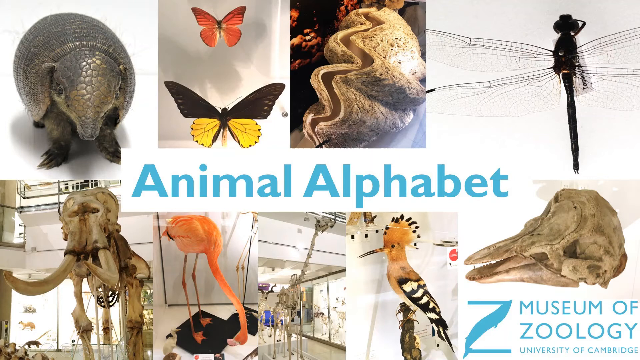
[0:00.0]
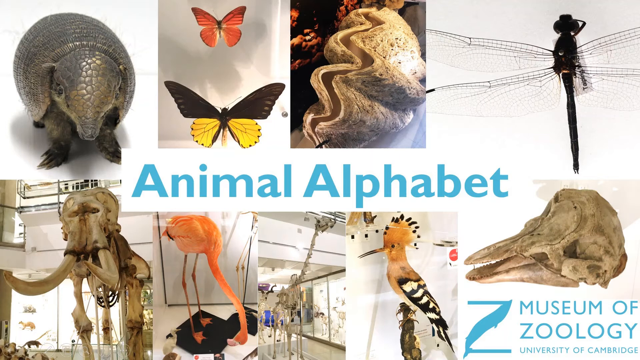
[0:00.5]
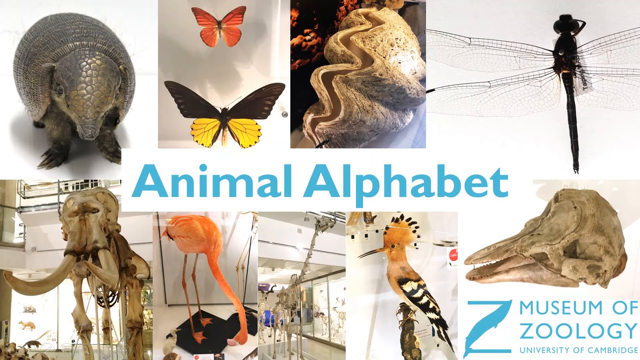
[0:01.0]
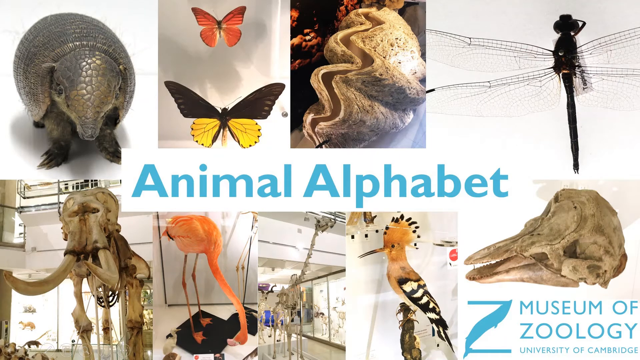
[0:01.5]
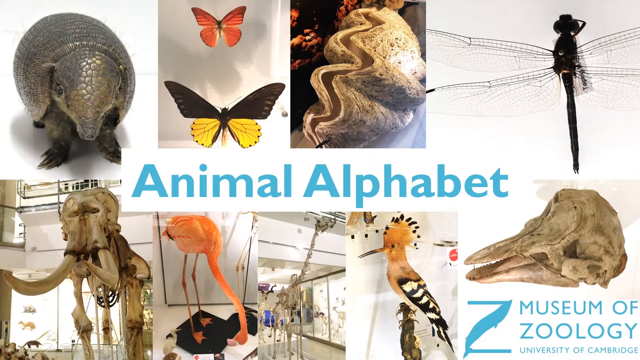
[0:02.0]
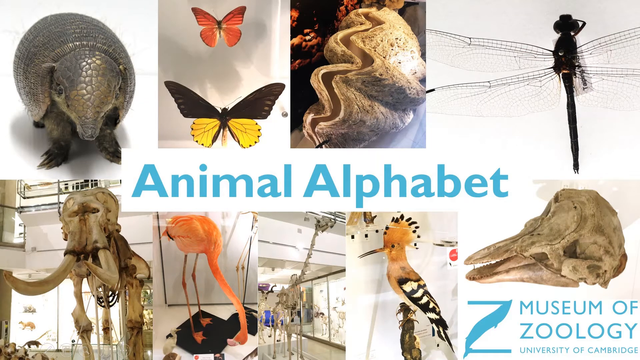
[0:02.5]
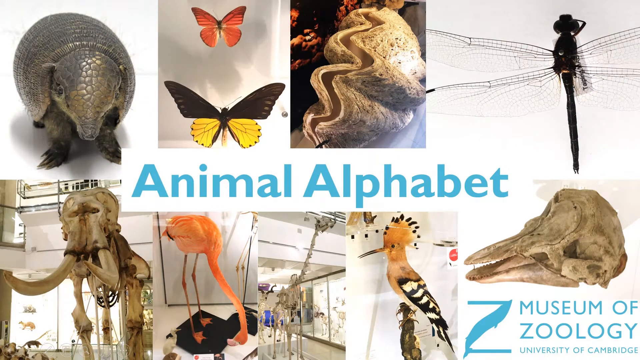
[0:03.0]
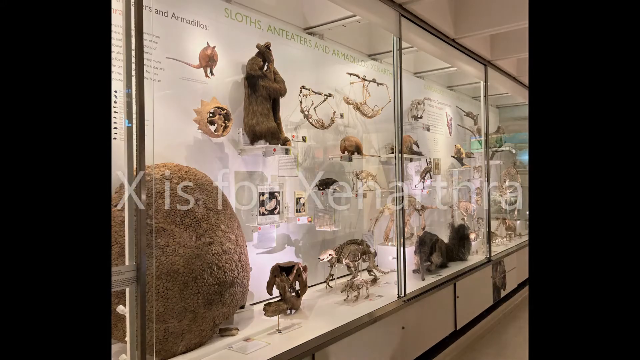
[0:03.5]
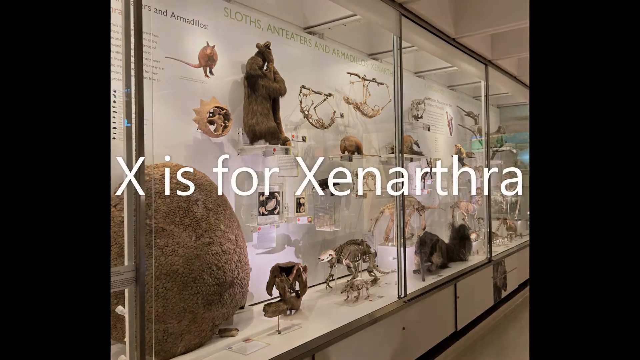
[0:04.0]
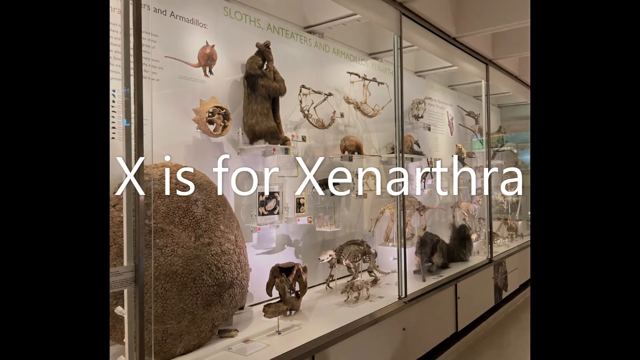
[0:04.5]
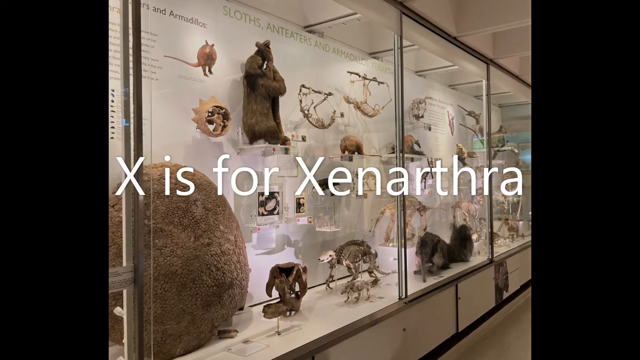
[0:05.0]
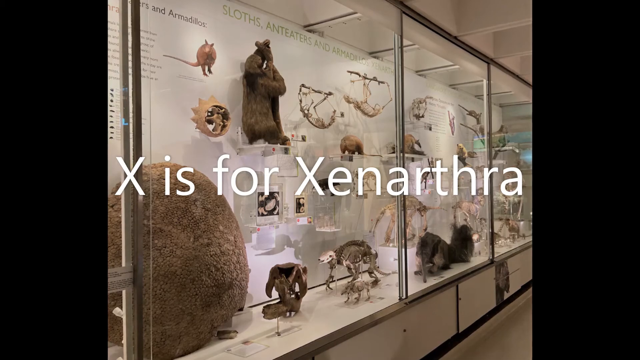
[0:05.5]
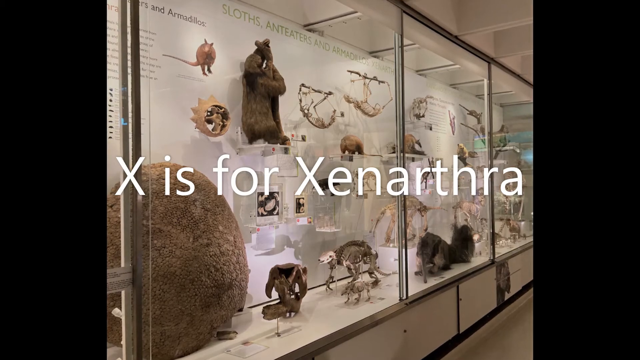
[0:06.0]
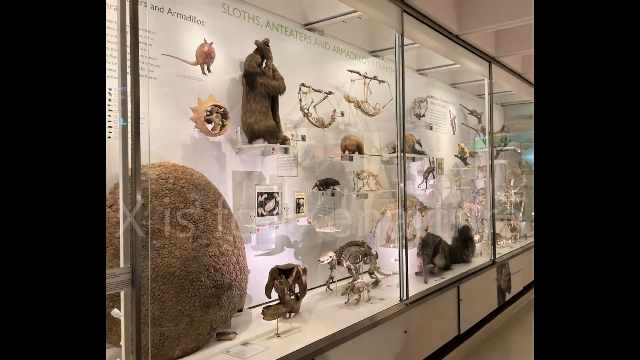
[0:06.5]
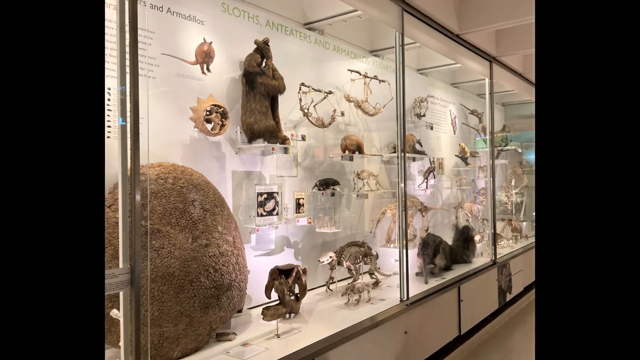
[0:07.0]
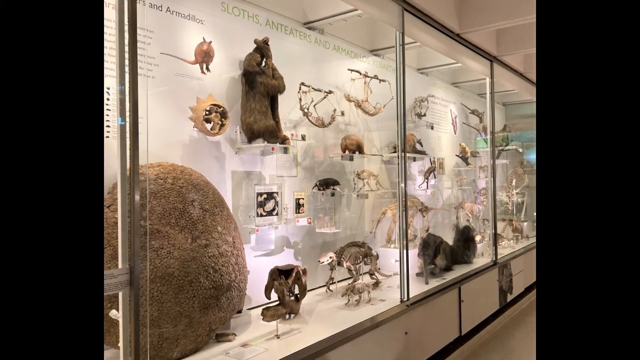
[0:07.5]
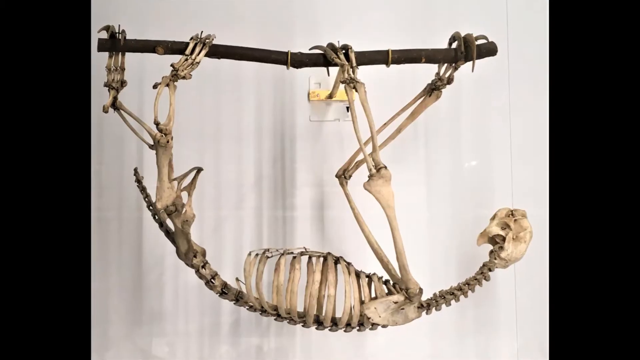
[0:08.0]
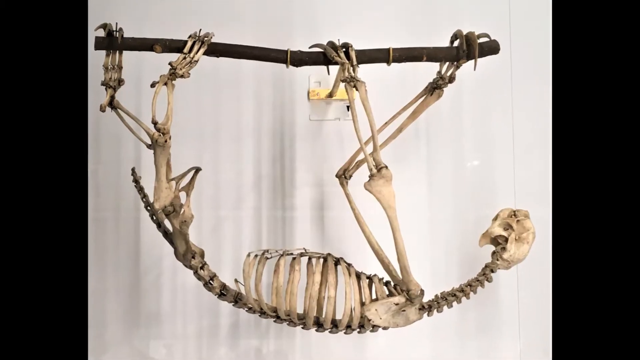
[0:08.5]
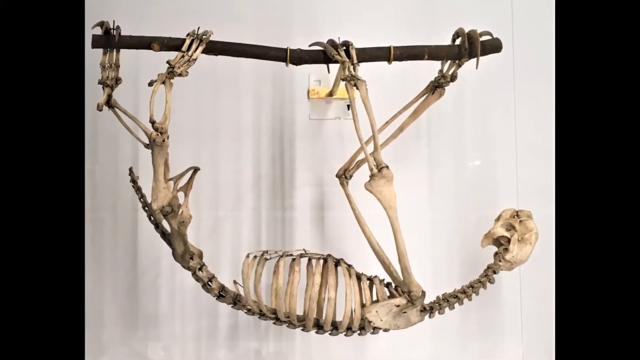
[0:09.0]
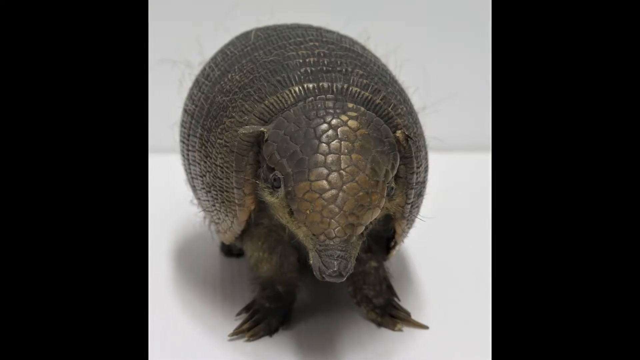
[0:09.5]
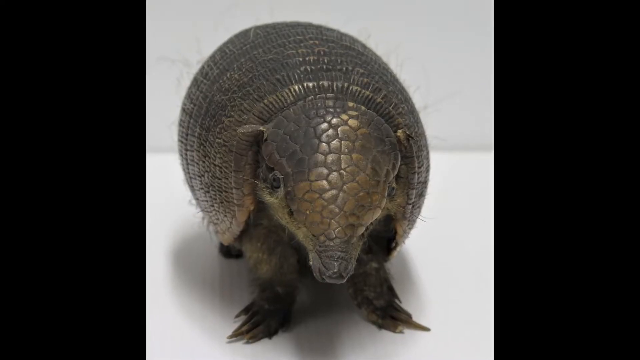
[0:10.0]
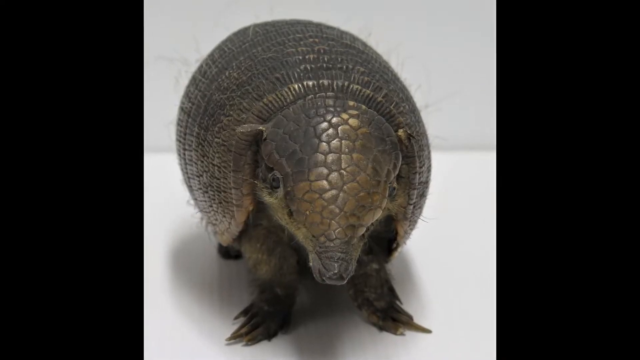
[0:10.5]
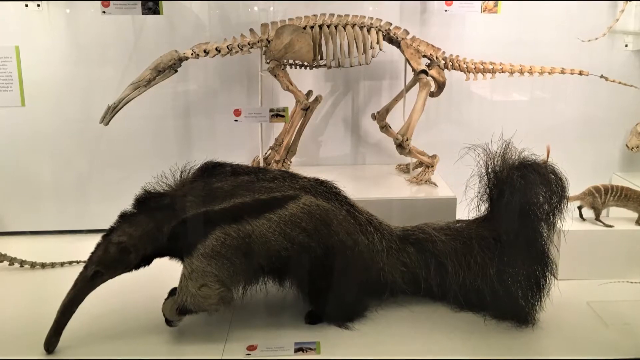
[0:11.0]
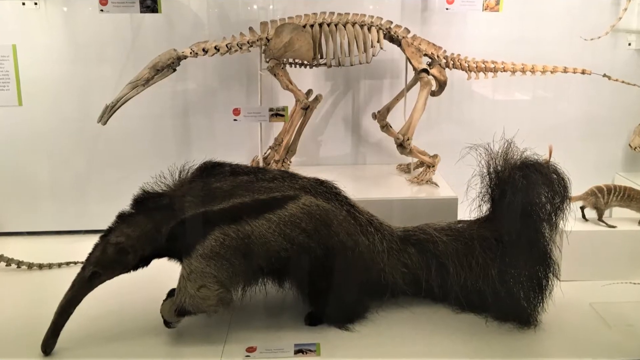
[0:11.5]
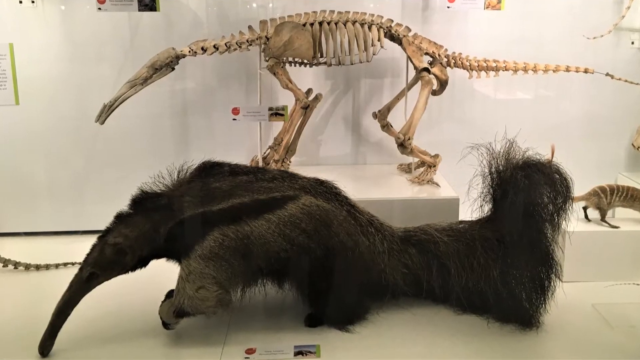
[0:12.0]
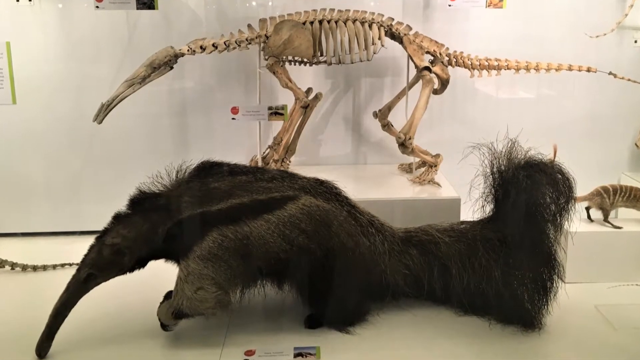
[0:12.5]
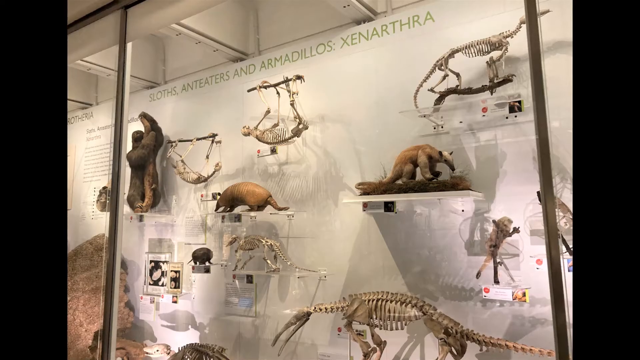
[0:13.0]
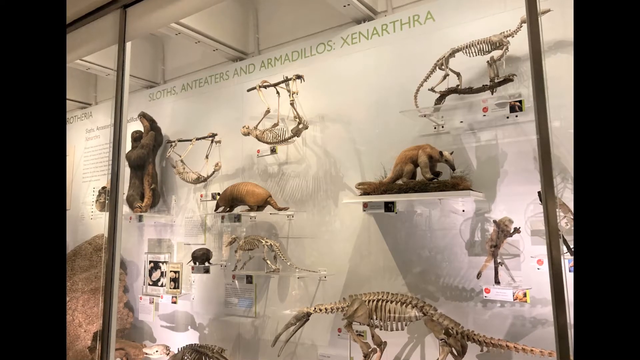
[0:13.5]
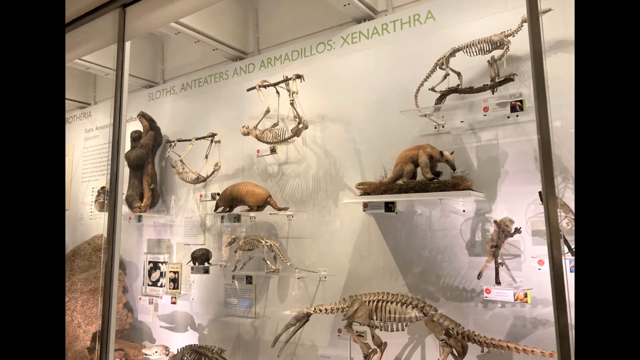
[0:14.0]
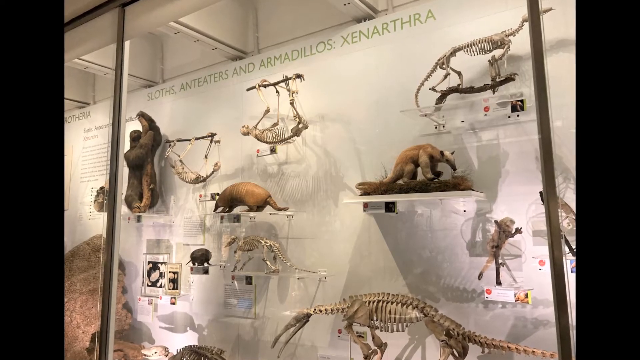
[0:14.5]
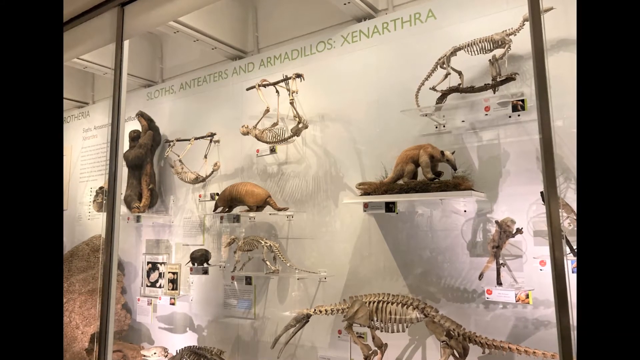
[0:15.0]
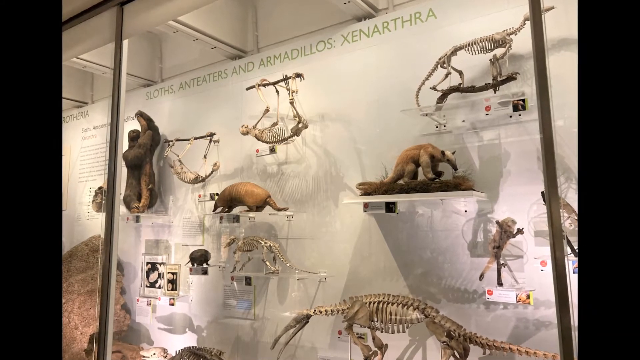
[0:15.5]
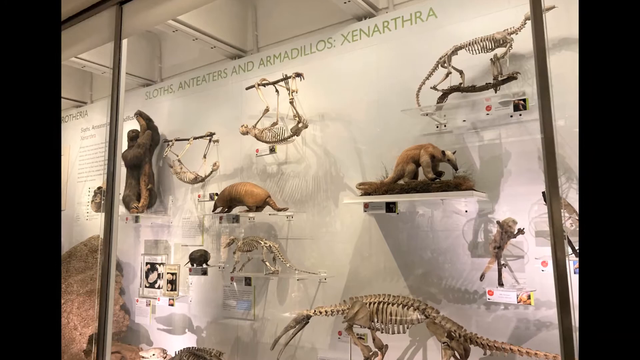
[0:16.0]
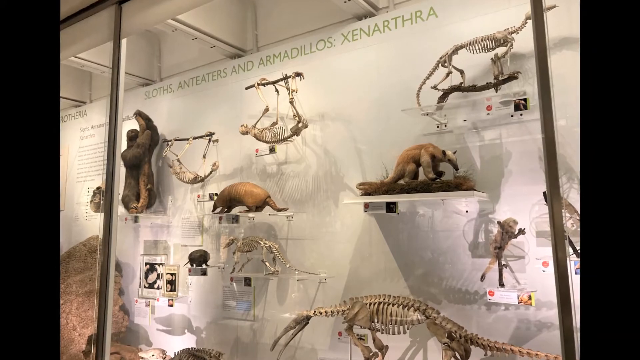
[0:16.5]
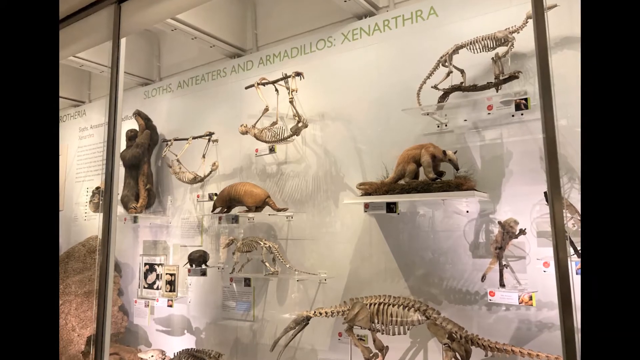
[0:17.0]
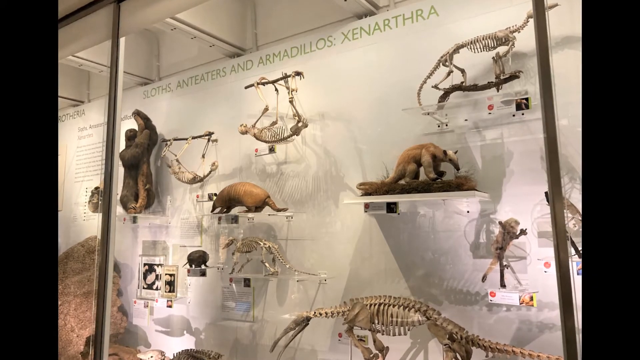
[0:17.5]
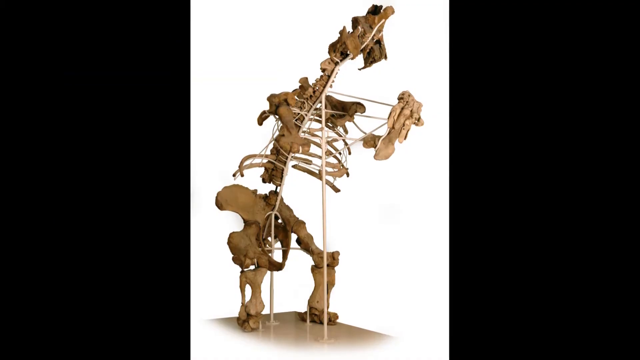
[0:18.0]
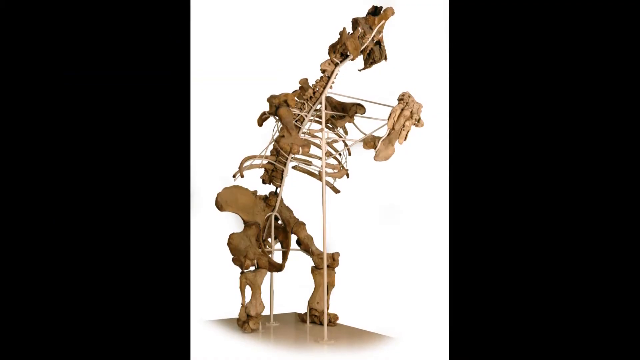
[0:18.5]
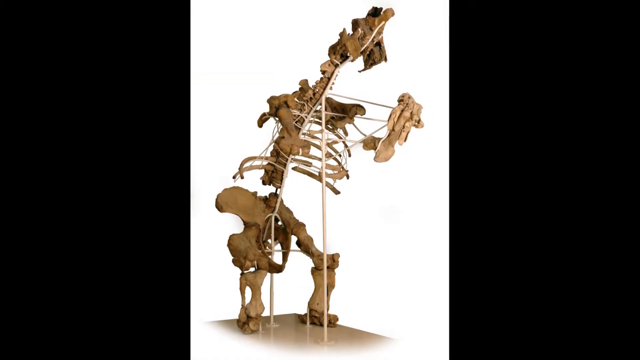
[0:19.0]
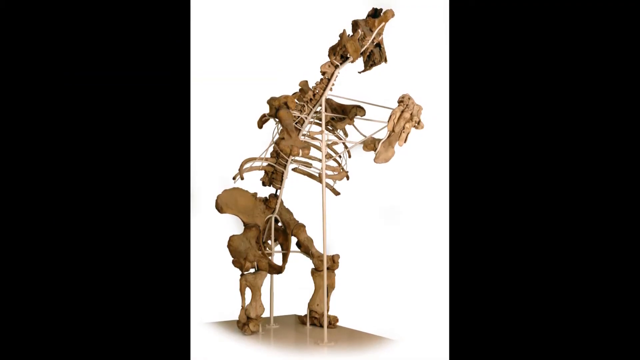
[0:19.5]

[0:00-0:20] The opening screen shows "Animal Alphabet" written in light blue in the middle, and in the right corner "Museum of Zoology, University of Cambridge" appears in blue. Four pictures run across the top of the screen: an armadillo; two butterflies, an orange one on top of a butterfly with black and yellow wings, black on the top; to the right of that a clam shell; and to the right of that a close-up of a dragonfly with a black body. Below the armadillo is a picture of a mammoth skeleton with its tusks. Next to that is a flamingo statue, and to the right of the flamingo is another animal skeleton. Next to that is a bird that looks like a woodpecker, with an orange head, black-and-white feathers on its body and the rest of it orange. The final picture, just above the words "Museum of Zoology", shows a dinosaur skull. The next screen shows the inside of the museum, with different bones and creatures behind plate glass, and white text on the front of the screen reads "X is for Xenarthra". Different pictures of animals and their skulls follow: first the skeleton of a possum, then the armadillo, then skeletons behind glass with the animals in front of them.